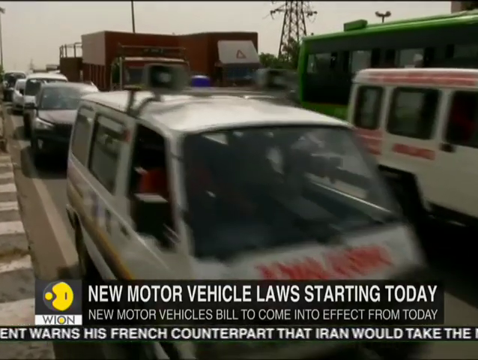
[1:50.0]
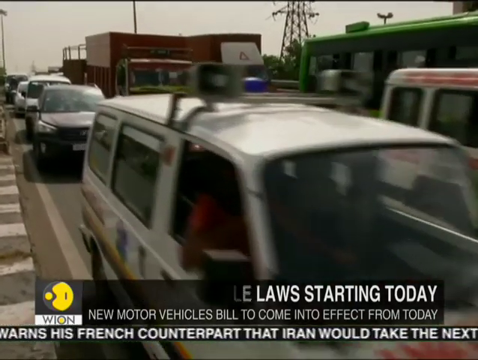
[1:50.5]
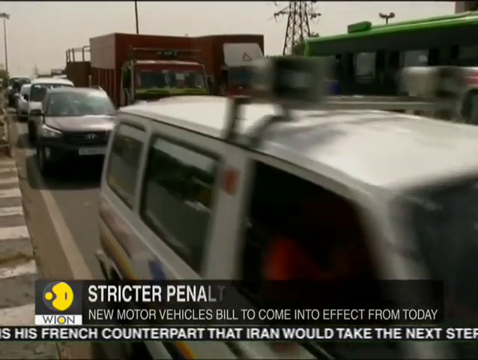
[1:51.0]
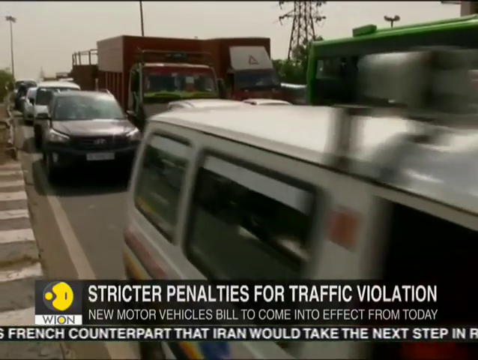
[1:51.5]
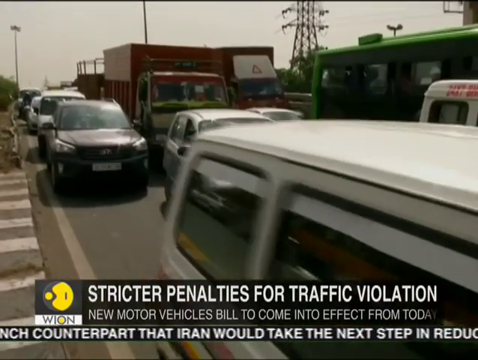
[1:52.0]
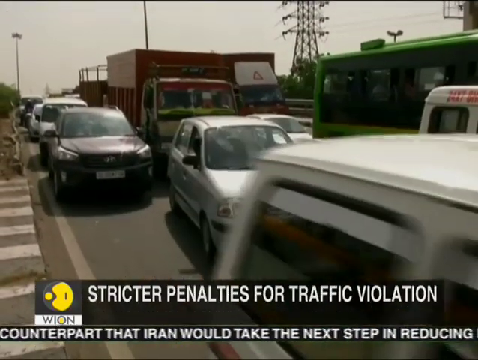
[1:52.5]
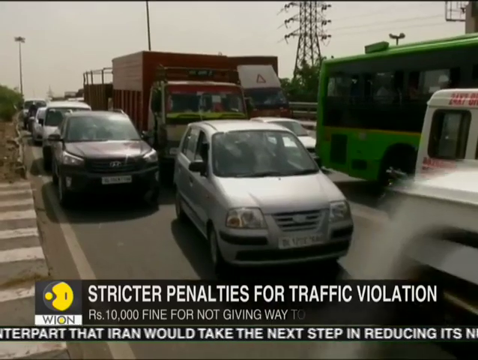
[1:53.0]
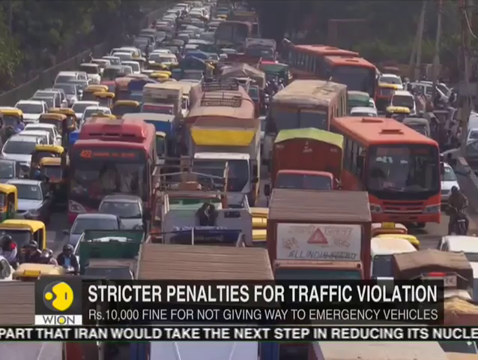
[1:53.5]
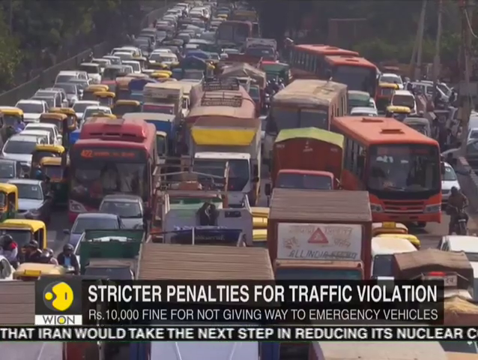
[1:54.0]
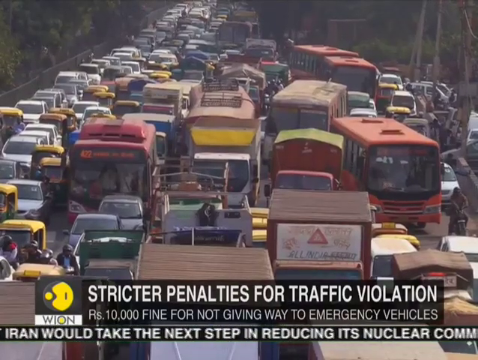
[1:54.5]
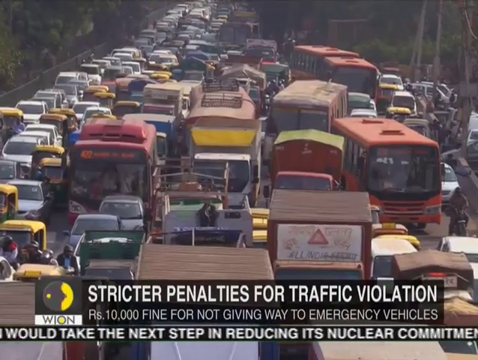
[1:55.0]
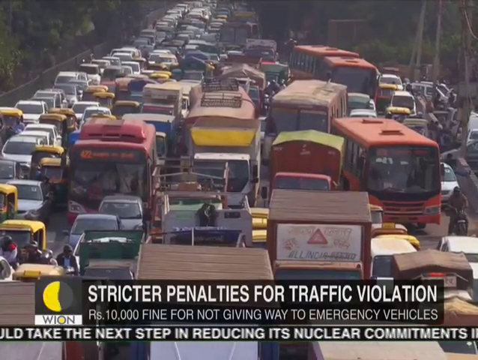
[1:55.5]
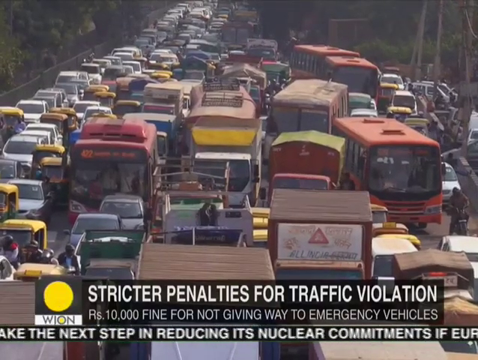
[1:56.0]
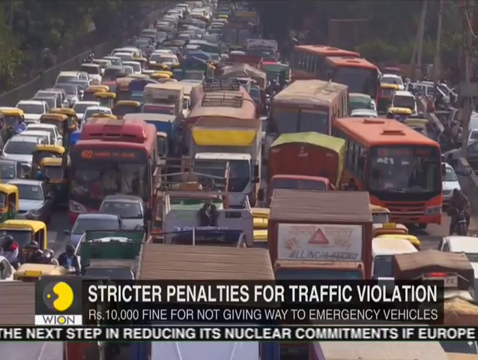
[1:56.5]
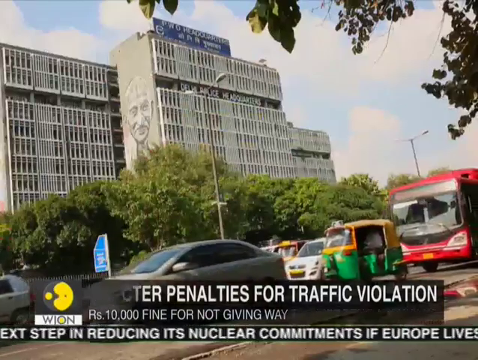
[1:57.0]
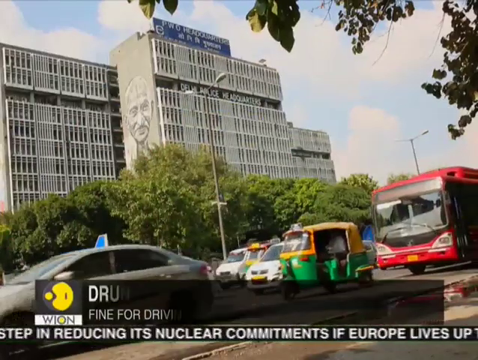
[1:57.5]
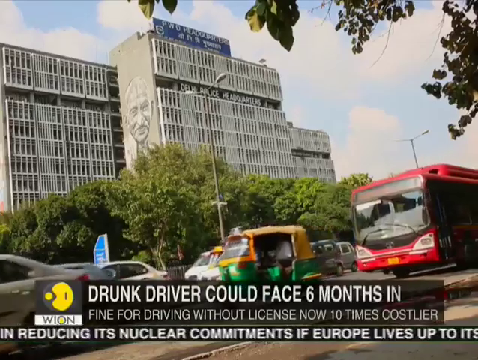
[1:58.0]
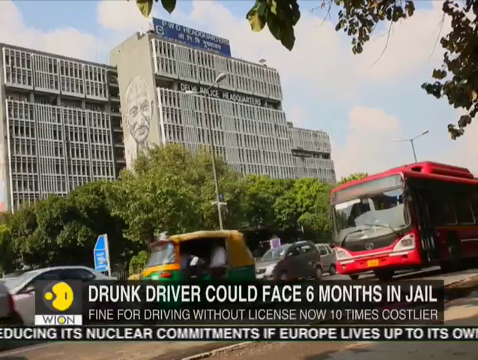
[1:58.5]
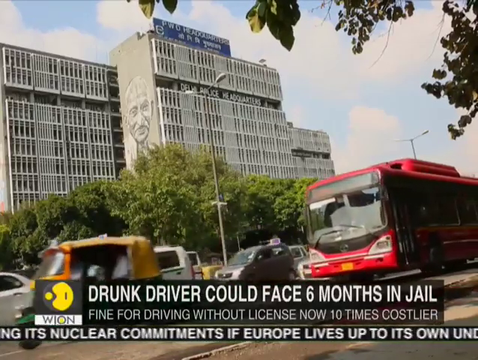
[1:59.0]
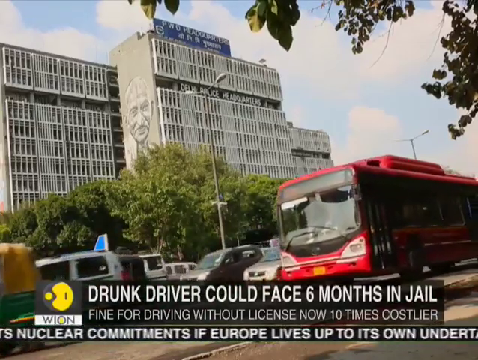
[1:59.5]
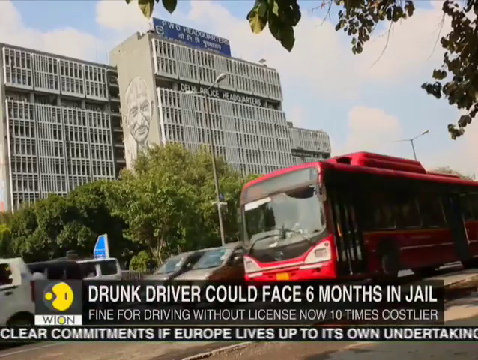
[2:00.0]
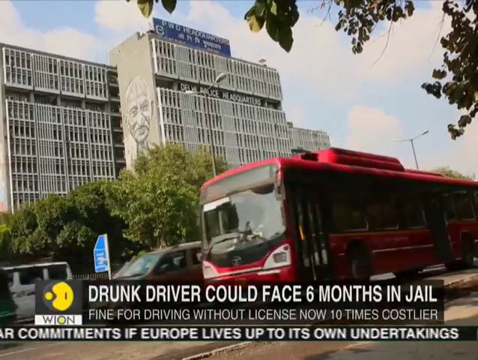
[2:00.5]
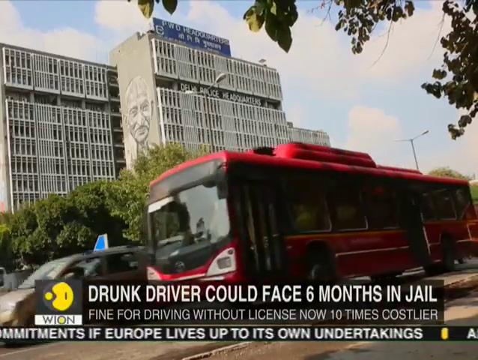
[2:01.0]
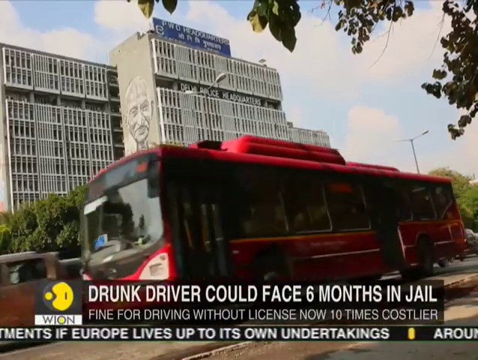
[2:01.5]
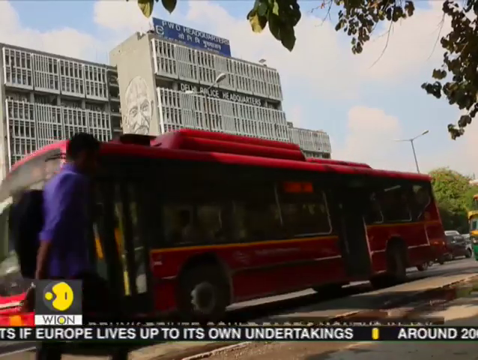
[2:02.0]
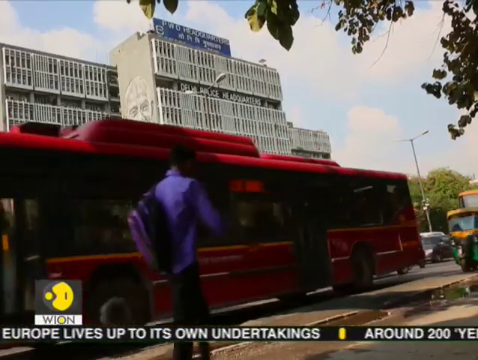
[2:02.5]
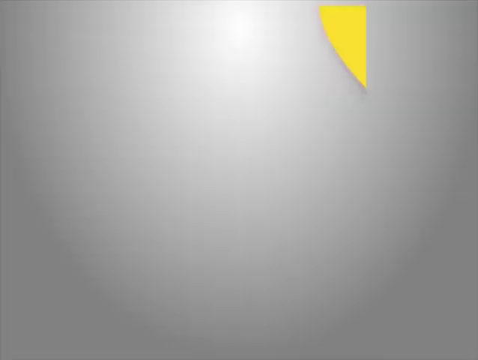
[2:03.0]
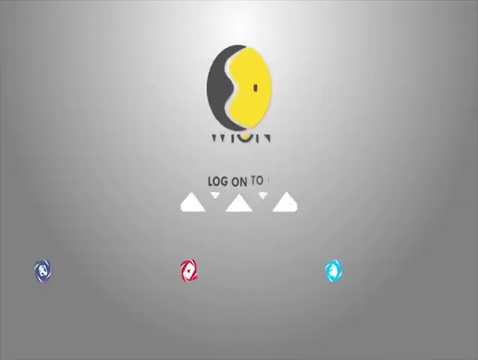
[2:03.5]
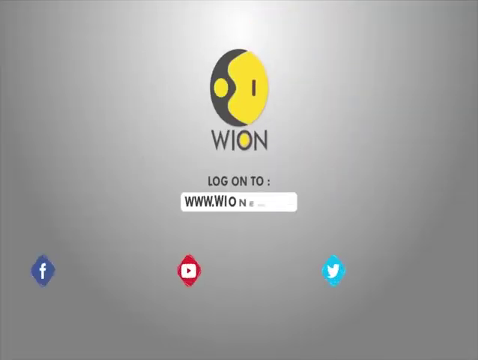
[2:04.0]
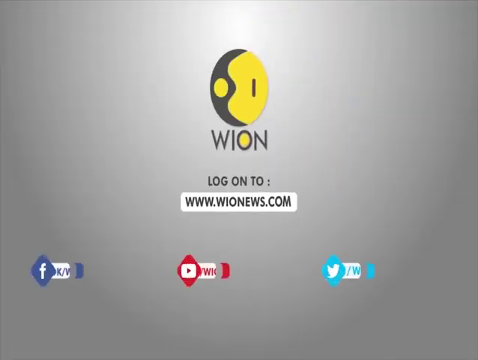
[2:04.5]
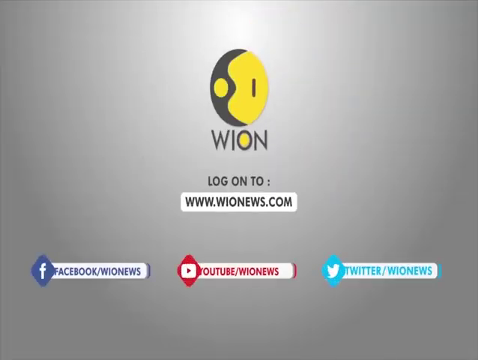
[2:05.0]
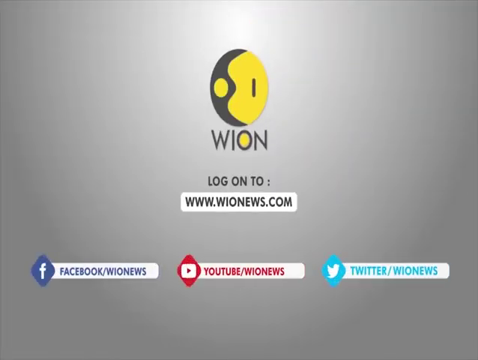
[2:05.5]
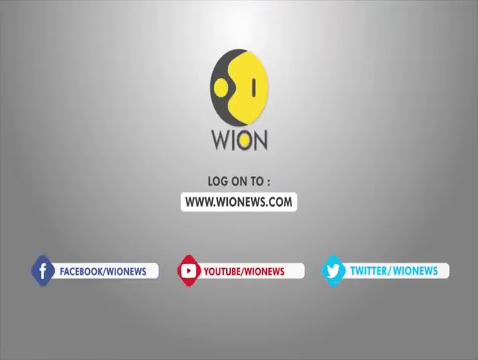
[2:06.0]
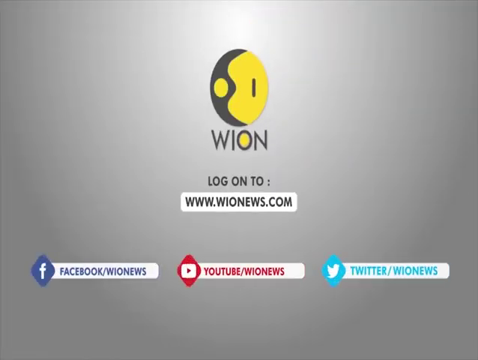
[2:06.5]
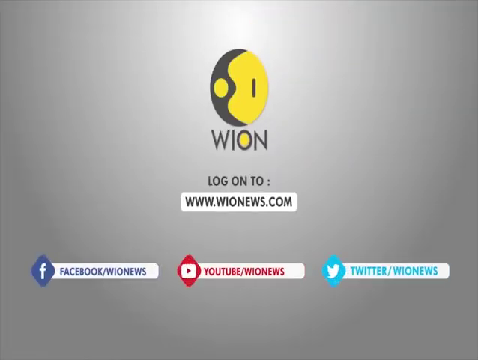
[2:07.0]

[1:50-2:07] Traffic is crowded in the street, especially in the right lane, where the road is congested and too many cars are not moving. Notable pink buses, cream vehicles, small cars and white trucks are in the congestion. The words "street penalties for traffic violations" are written on the screen. Another screen pops up showing a large gray building. A red bus crosses the road, and a three-wheeler crosses with several cars. Trees are visible, and the sky is blue with white clouds. Text also reads "Drunk driver could face six months in jail." A male wearing a purple T-shirt crosses. Finally, the news anchor is seen sitting at the table, finishing up the report.